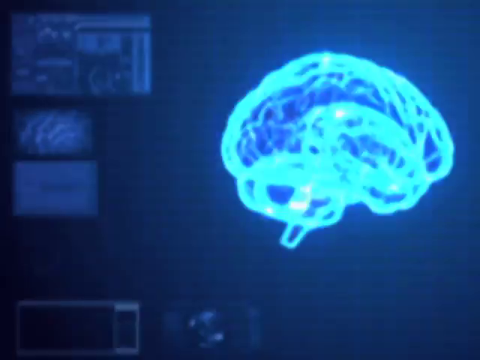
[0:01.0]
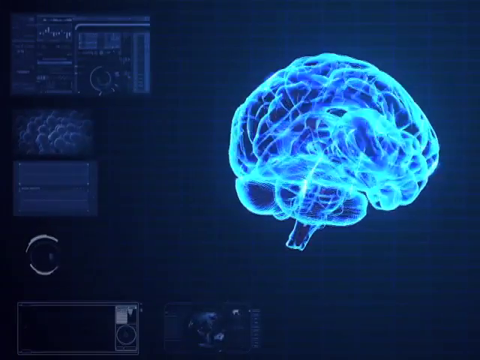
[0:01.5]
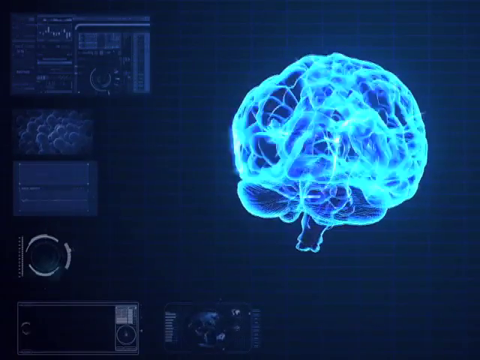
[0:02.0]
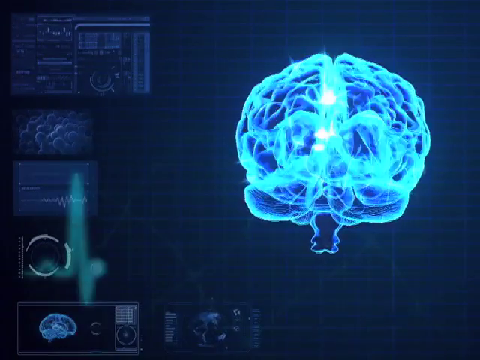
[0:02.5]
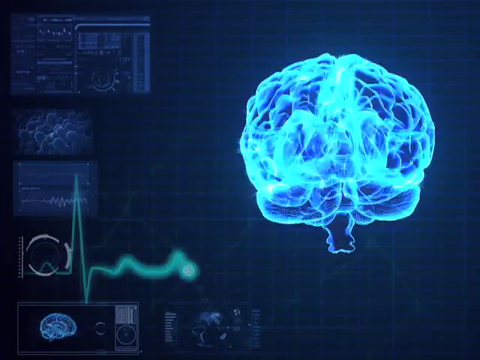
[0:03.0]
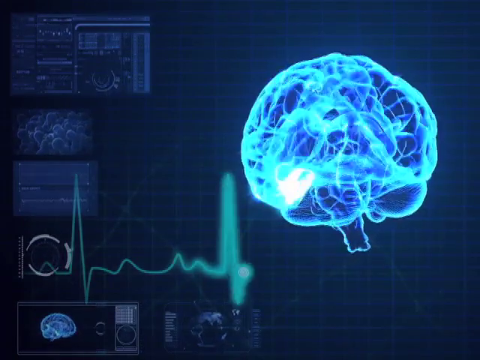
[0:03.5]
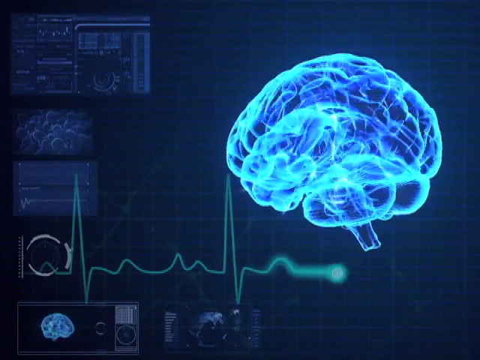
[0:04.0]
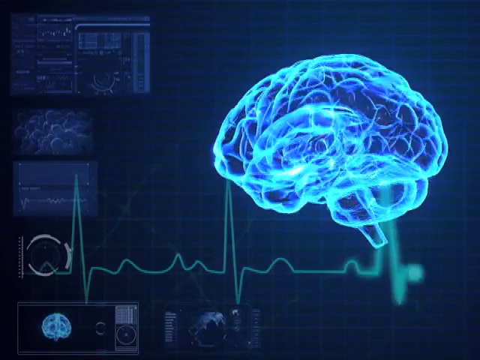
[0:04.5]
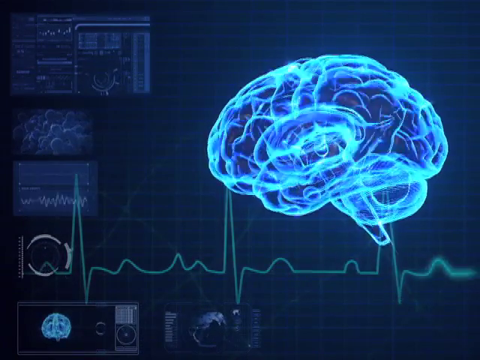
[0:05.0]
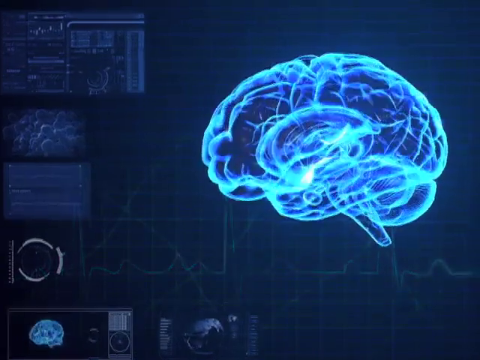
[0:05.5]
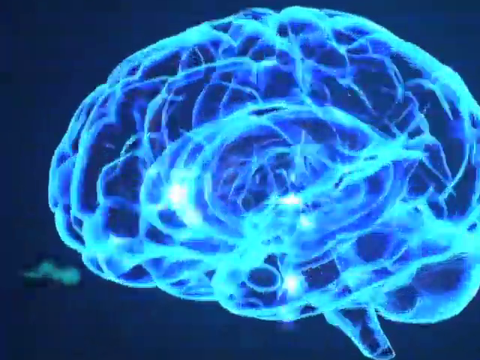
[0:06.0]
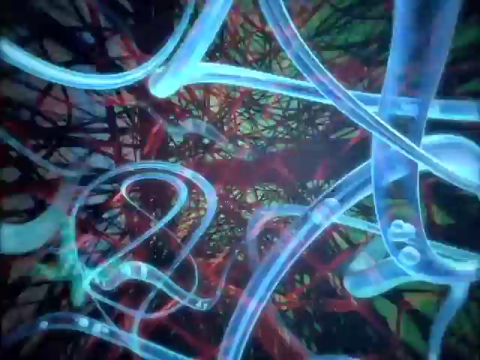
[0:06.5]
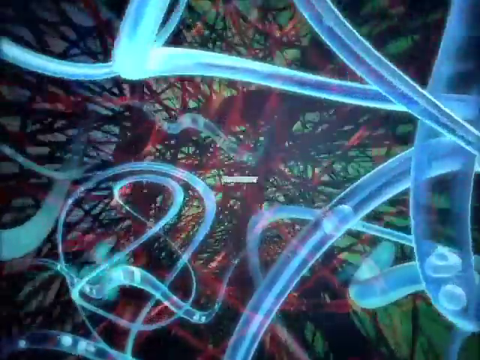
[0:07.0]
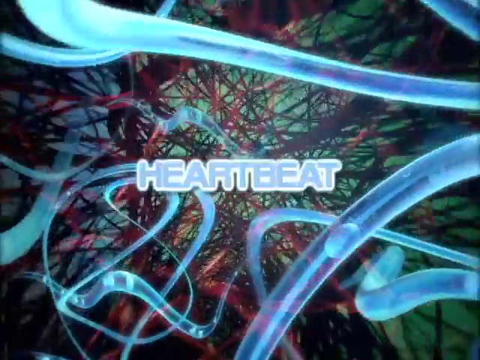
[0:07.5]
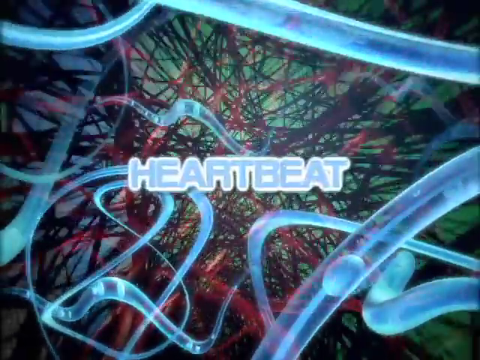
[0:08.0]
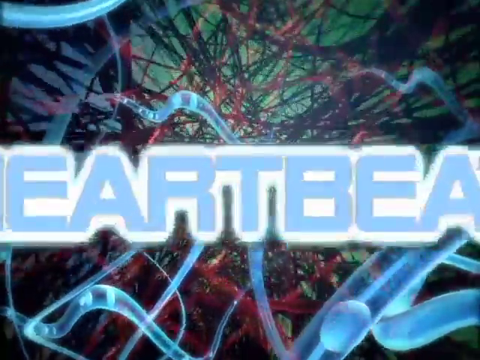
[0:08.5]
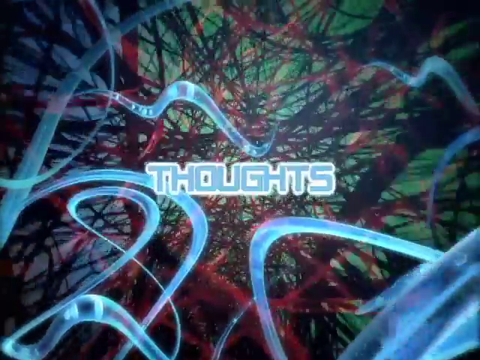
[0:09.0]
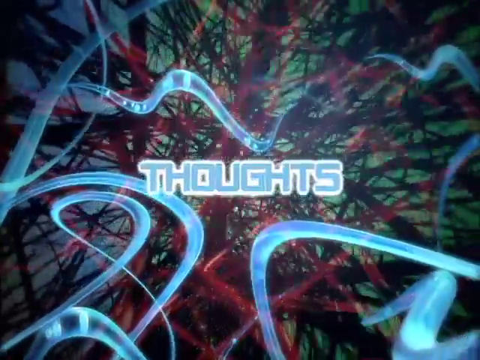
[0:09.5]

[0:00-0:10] Against a deep blue-black background, a translucent brain outlined in electric light blue appears in the right center of the image, showing the brain and the brainstem as it turns around in a circle. In the upper left corner are three descending rectangles showing different statistics and vitals. Across the bottom, a heartbeat moves as a pulse from left to right, zipping up and down and back and forth as it goes across. The view pans into the brain, showing various neural networks within it in translucent light blue, red and black; they look like a bunch of strings criss-crossing each other, intermingled and moving. In the center of the image, light blue text pops up reading "heartbeat", followed by "thoughts", and then the image pans to solid black with nothing in the background.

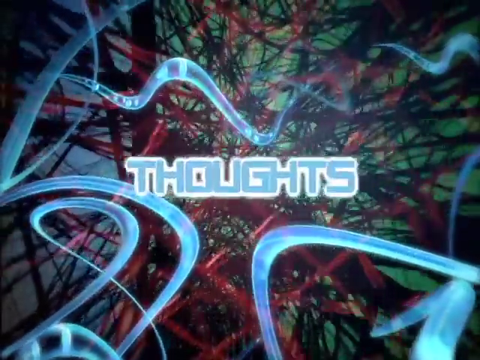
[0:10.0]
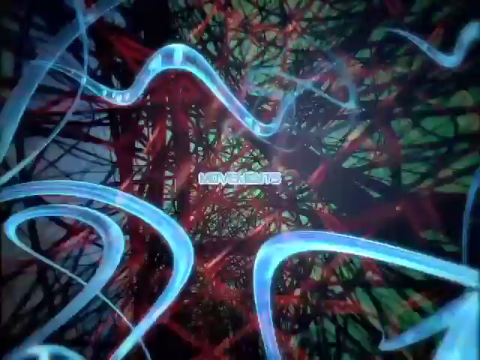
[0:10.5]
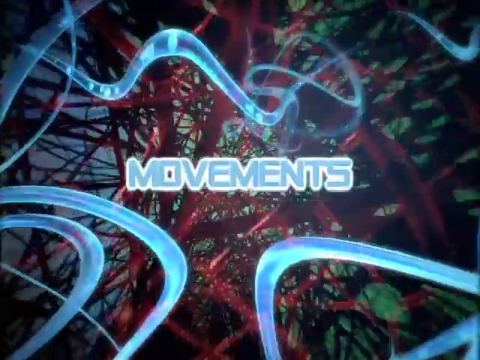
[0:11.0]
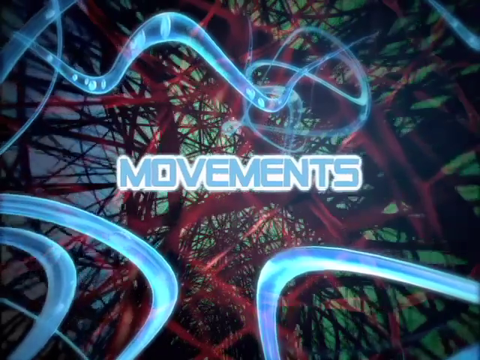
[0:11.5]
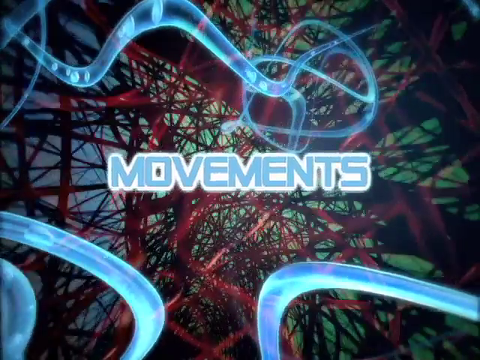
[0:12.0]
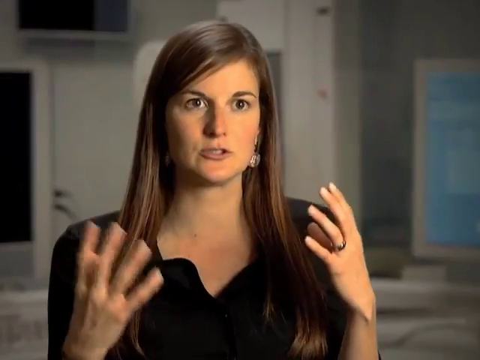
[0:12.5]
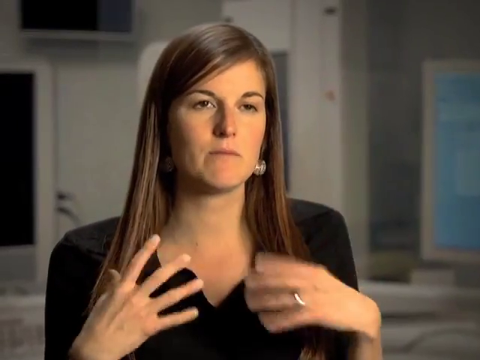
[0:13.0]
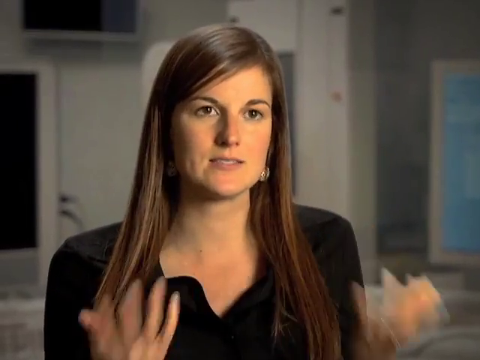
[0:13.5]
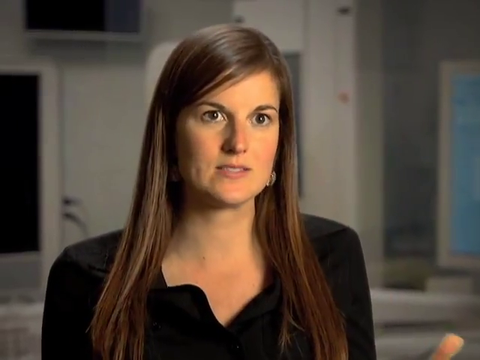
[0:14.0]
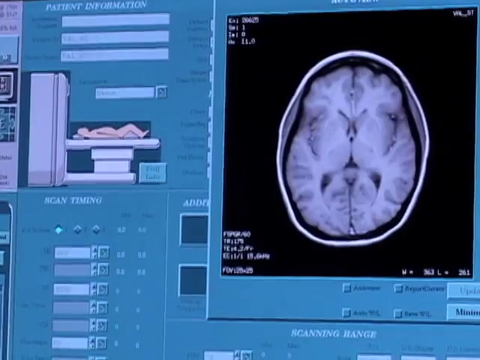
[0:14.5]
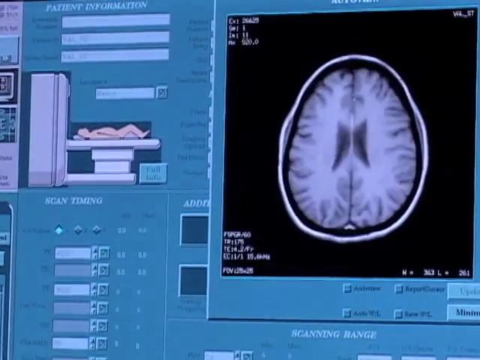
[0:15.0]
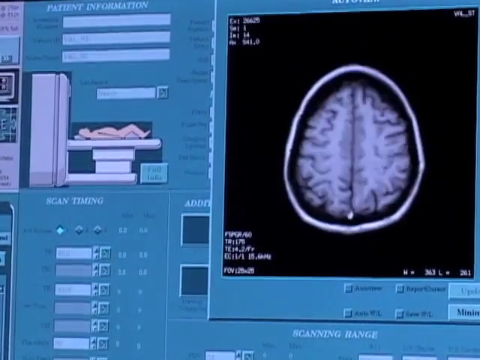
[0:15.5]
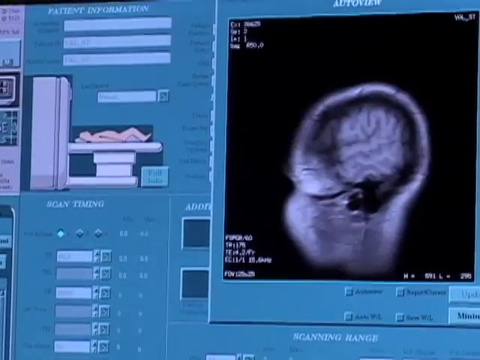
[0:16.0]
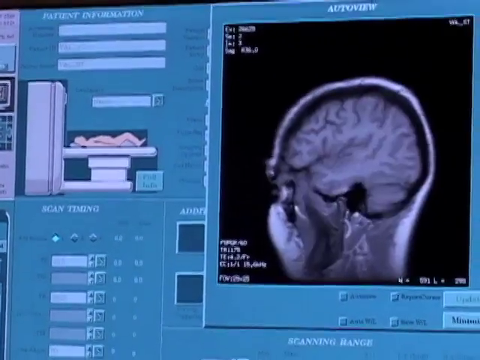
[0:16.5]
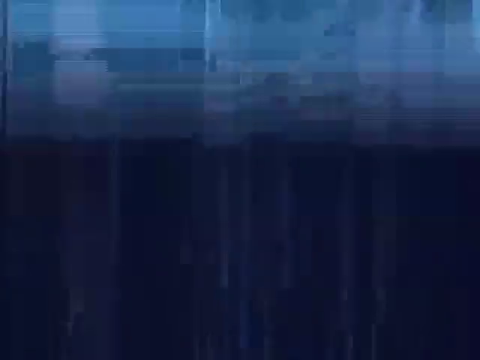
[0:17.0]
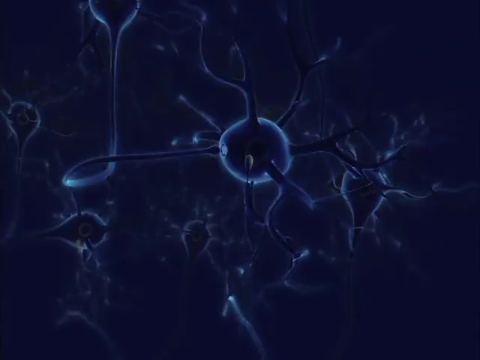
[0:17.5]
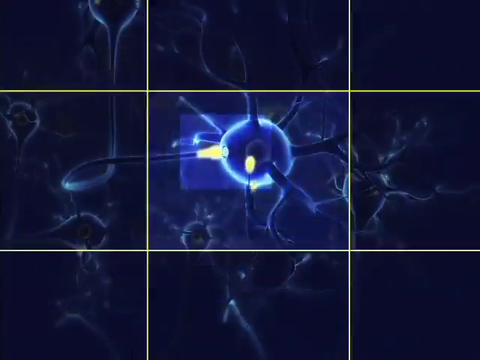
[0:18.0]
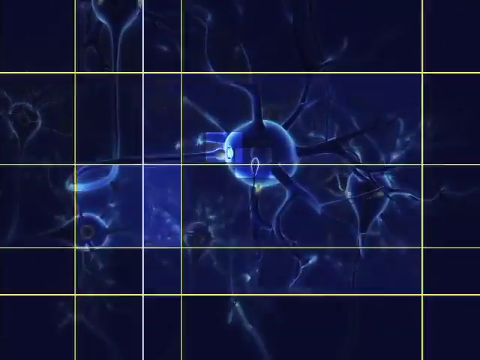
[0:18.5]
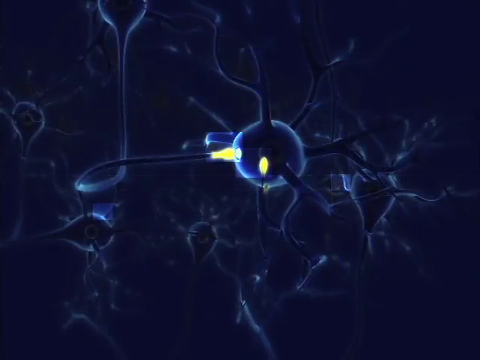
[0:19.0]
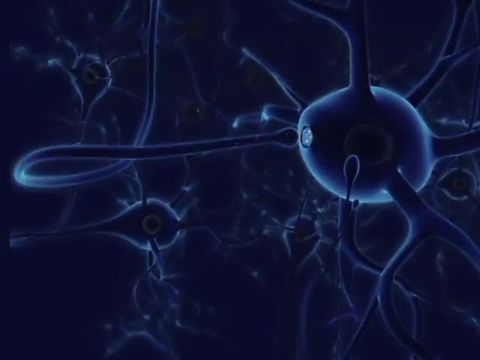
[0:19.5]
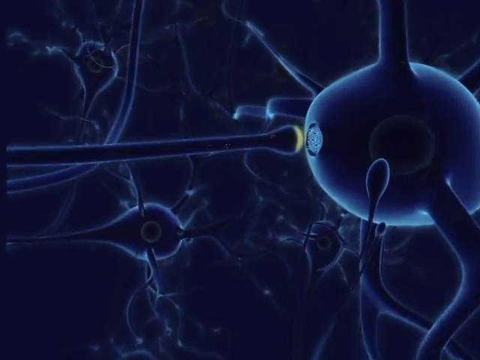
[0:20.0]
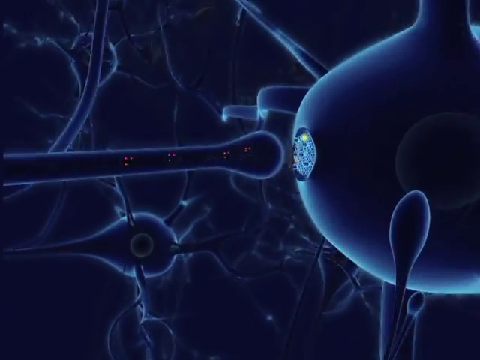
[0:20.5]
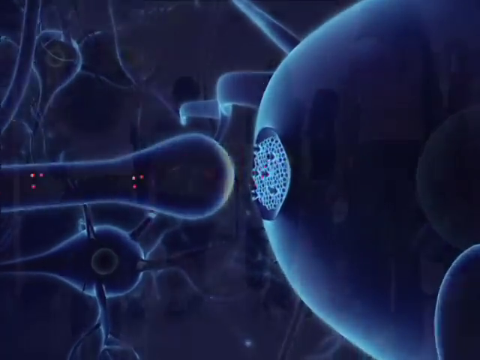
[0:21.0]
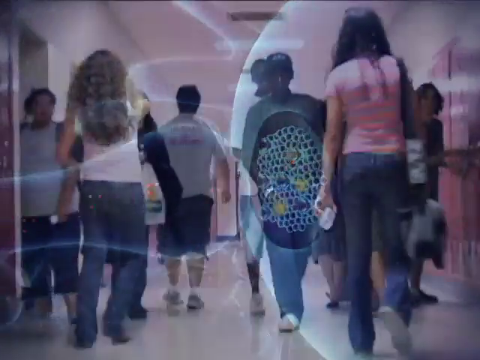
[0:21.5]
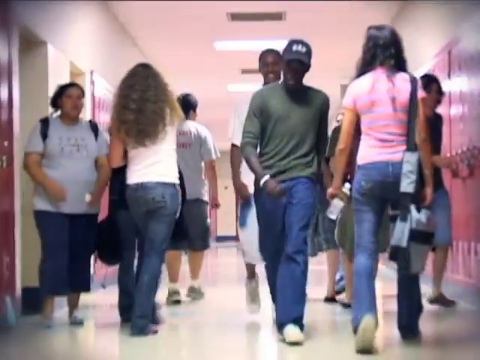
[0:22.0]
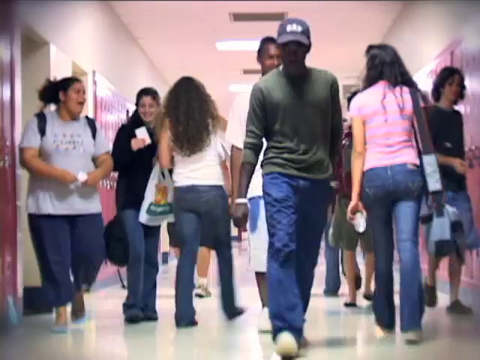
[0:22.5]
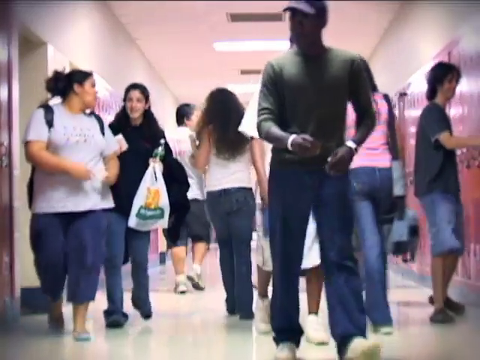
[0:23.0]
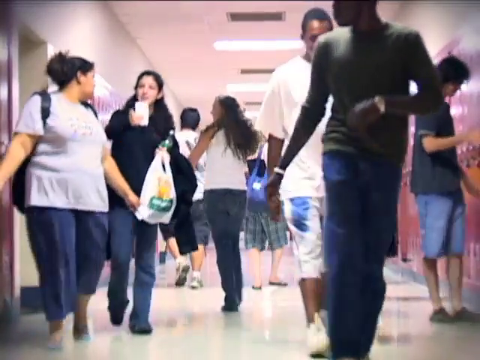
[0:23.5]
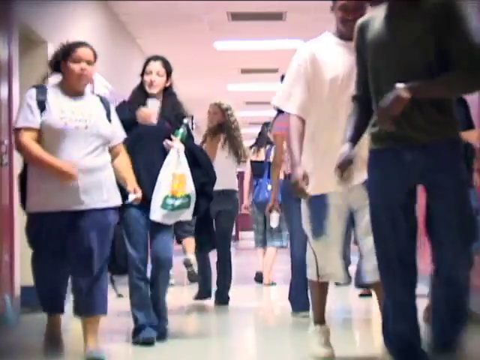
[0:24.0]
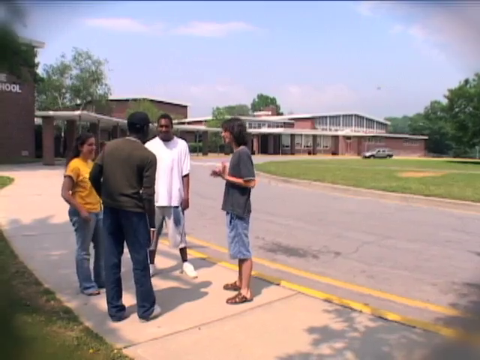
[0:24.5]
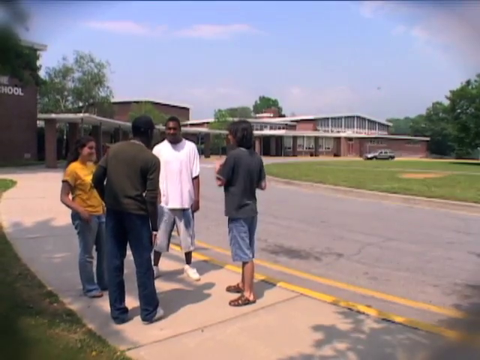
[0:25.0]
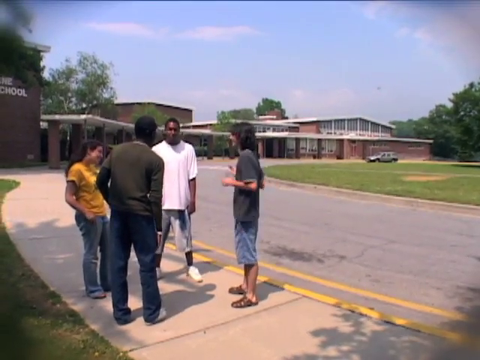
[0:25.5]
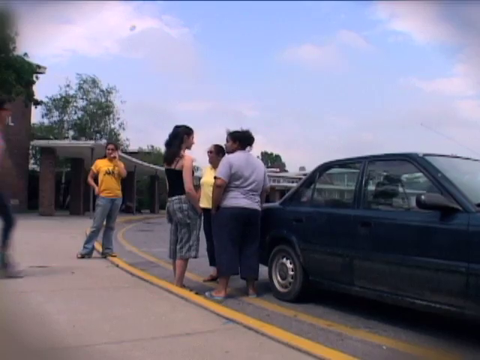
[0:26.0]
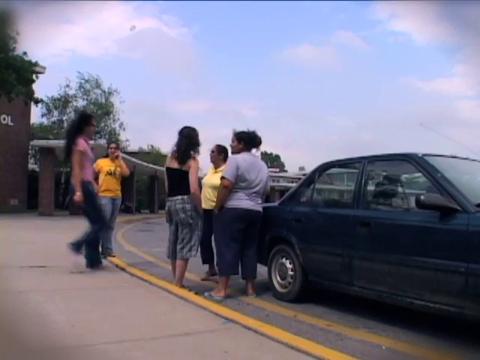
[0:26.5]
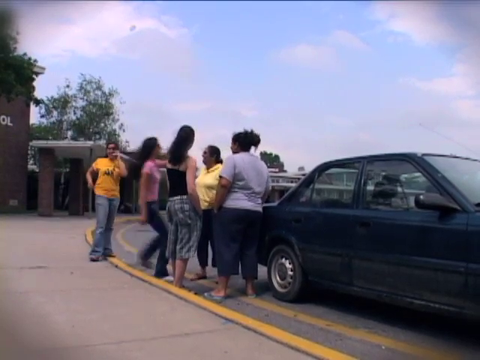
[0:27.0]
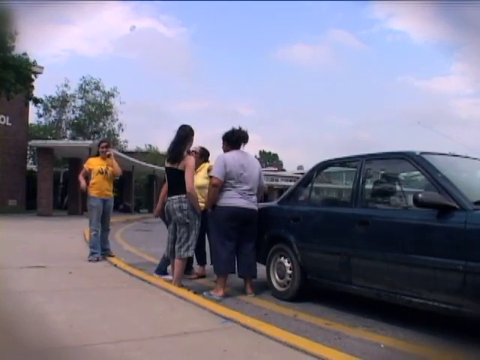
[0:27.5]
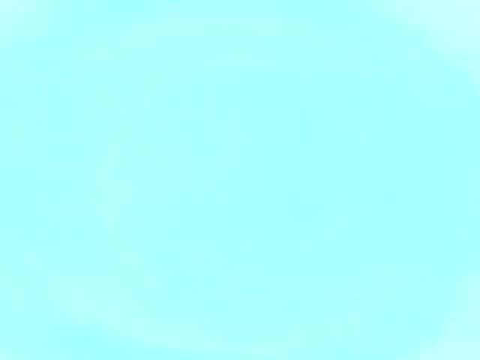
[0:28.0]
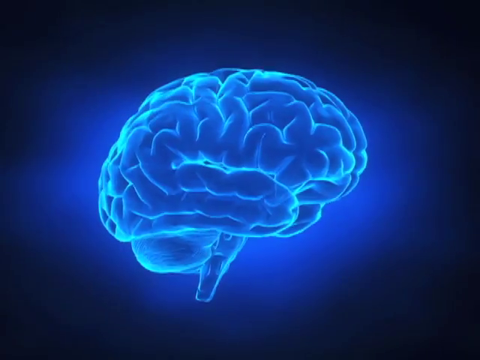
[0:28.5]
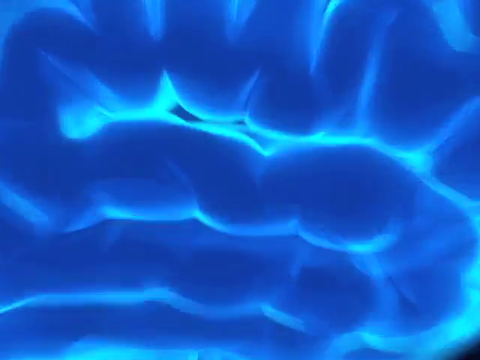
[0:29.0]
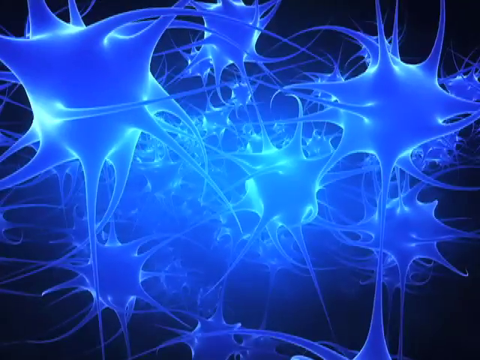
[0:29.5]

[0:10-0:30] The neural anatomy of the brain is shown, with red and black nerve fibers, as well as translucent blue ones, crisscrossing the entire image. They look like a bunch of string of various thicknesses intersecting in different ways. Light blue text outlined in white in the very center reads "thoughts" as it scrolls toward the viewer, followed by a single light blue word with white outlining in the center, "movements", which also scrolls toward the viewer. The view then pans to a middle-aged Caucasian woman with perfectly straight light brown hair parted on the left side and large open brown eyes. She has both hands raised in front of her as she speaks, and wears a wedding band on her left ring finger, a long-sleeved black top and heavy earrings. The room behind her has white walls and multiple monitors with black screens and white frames; one at the far right has a white frame with a blue screen. She talks animatedly, describing something.